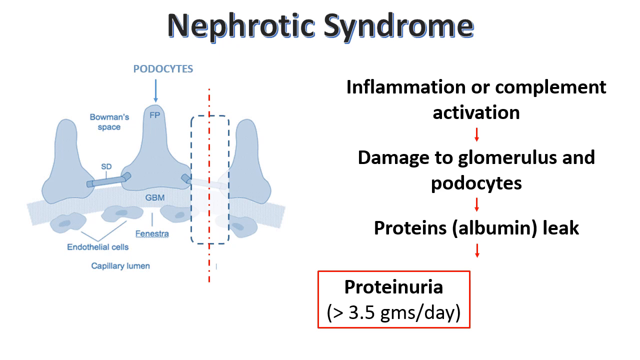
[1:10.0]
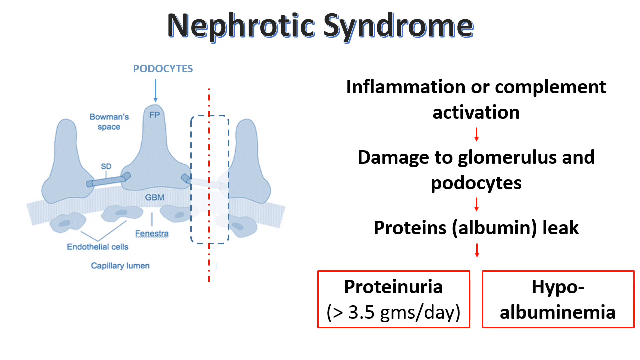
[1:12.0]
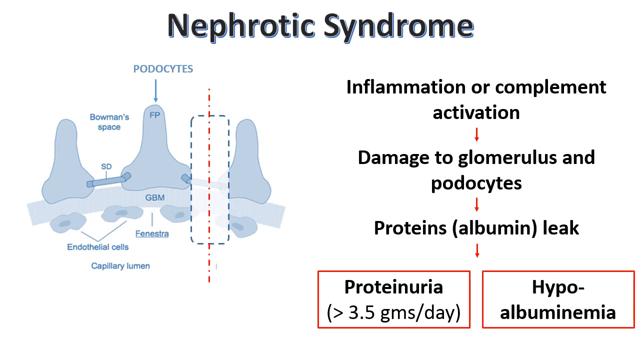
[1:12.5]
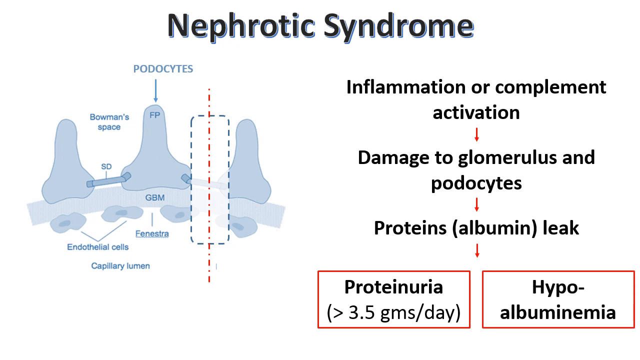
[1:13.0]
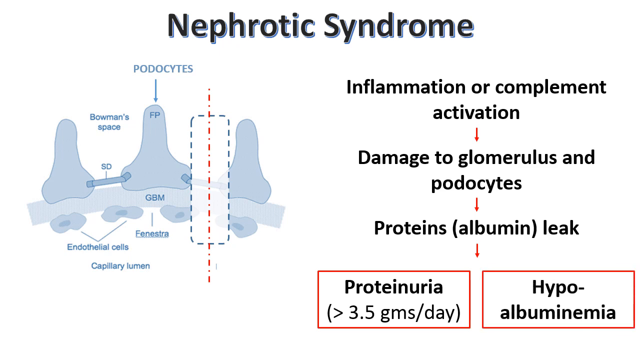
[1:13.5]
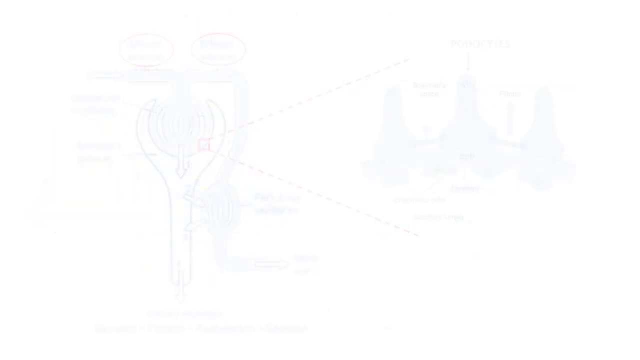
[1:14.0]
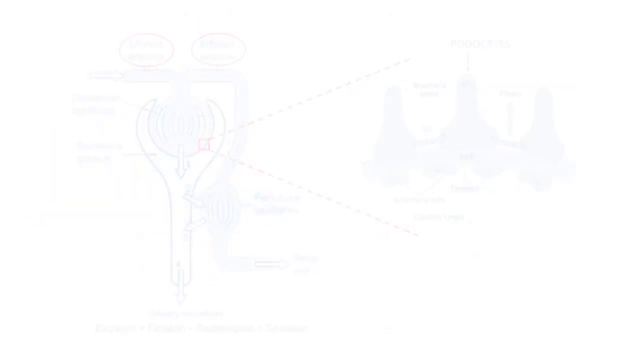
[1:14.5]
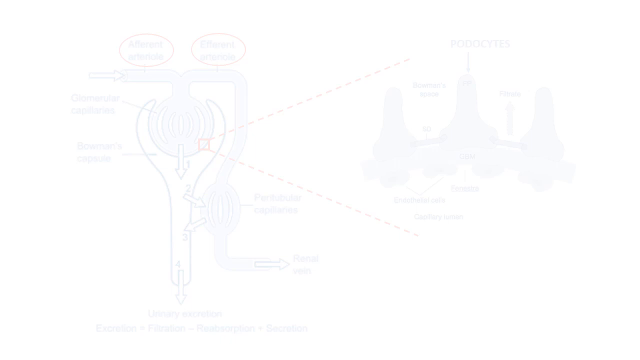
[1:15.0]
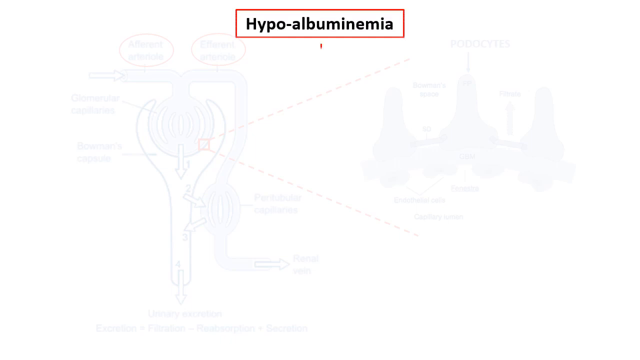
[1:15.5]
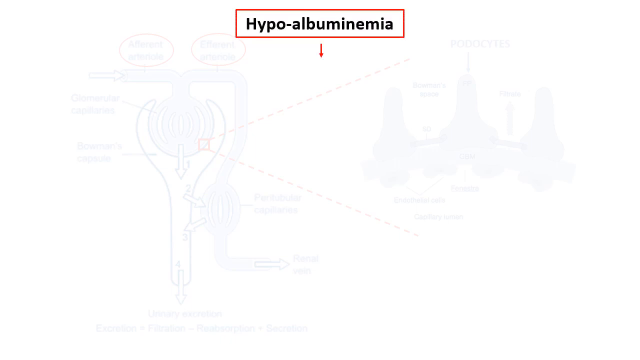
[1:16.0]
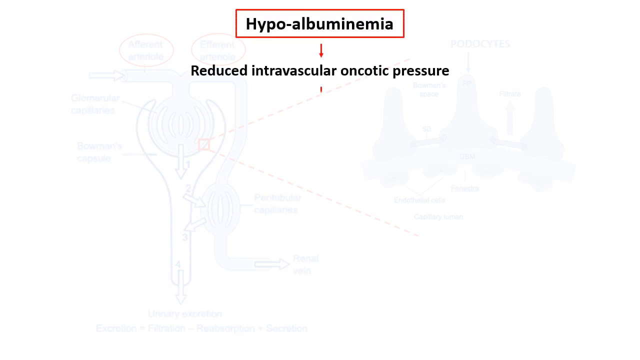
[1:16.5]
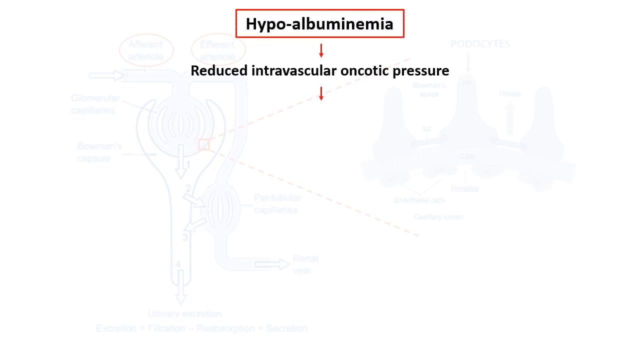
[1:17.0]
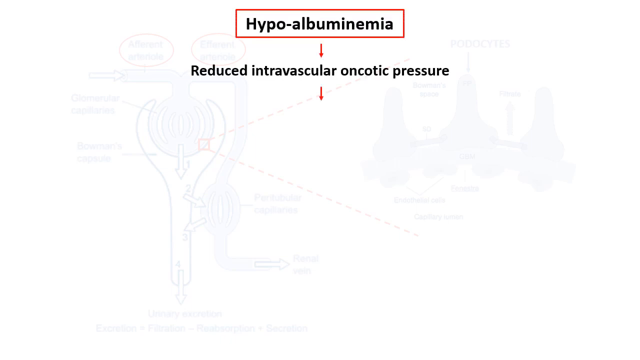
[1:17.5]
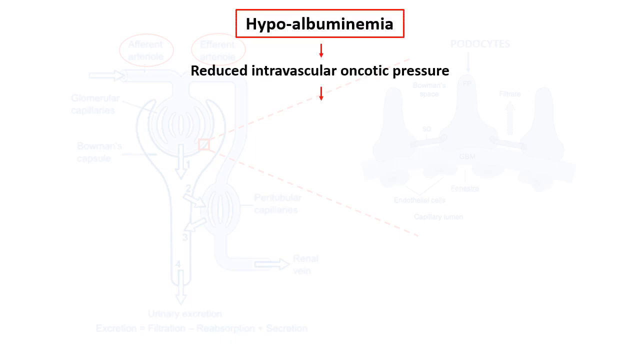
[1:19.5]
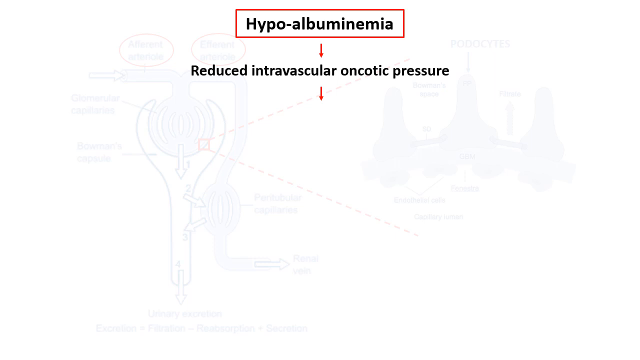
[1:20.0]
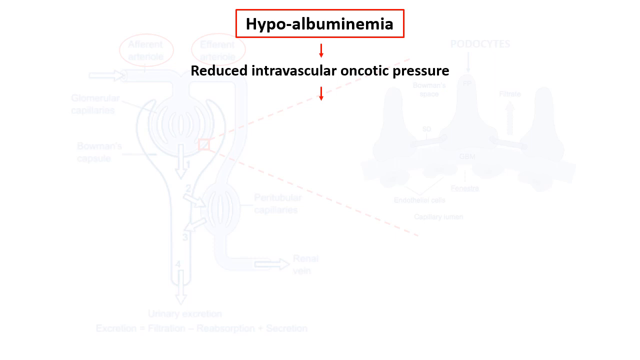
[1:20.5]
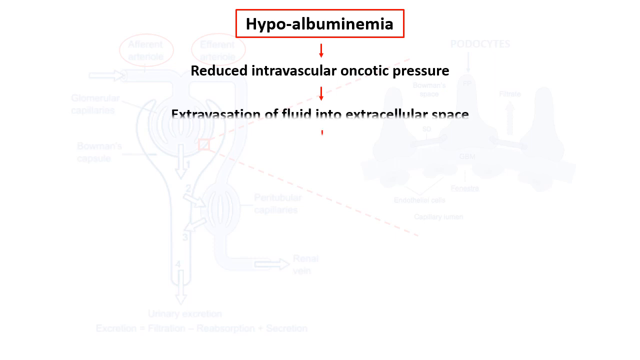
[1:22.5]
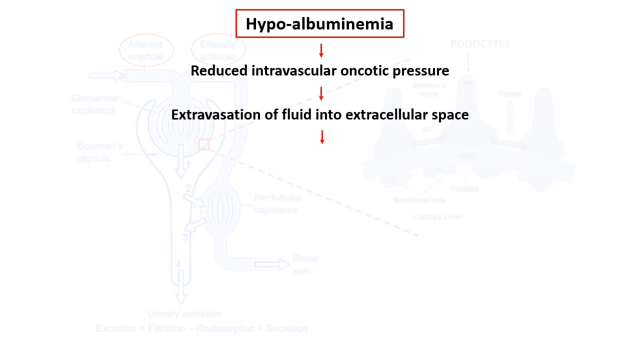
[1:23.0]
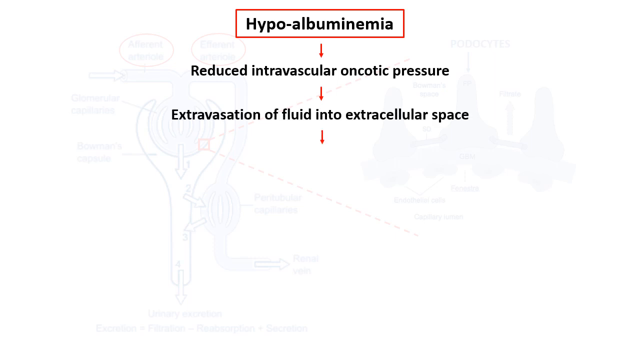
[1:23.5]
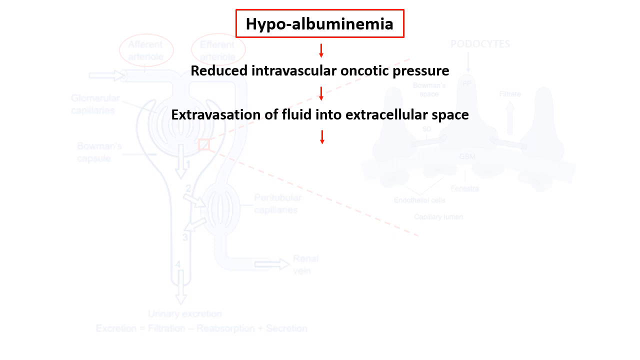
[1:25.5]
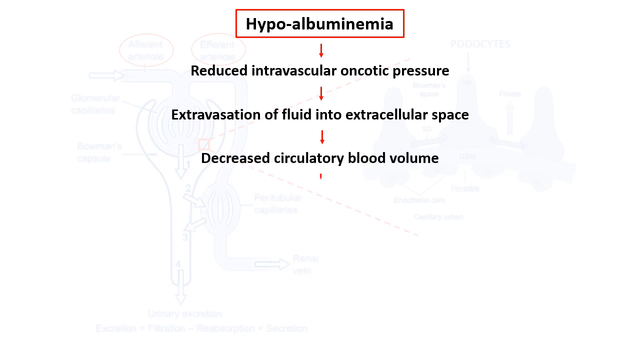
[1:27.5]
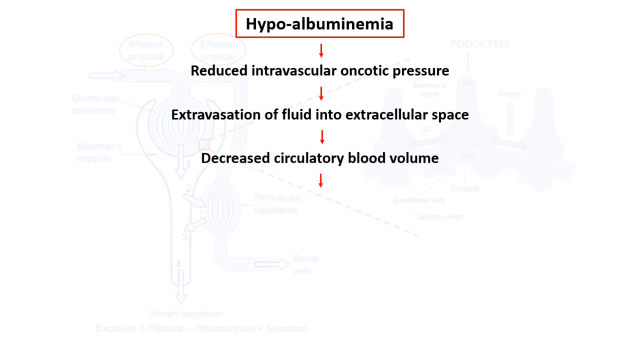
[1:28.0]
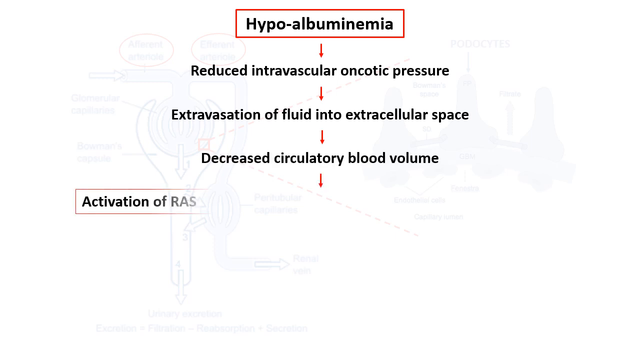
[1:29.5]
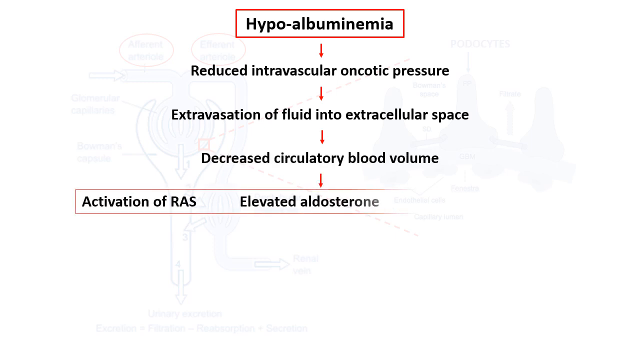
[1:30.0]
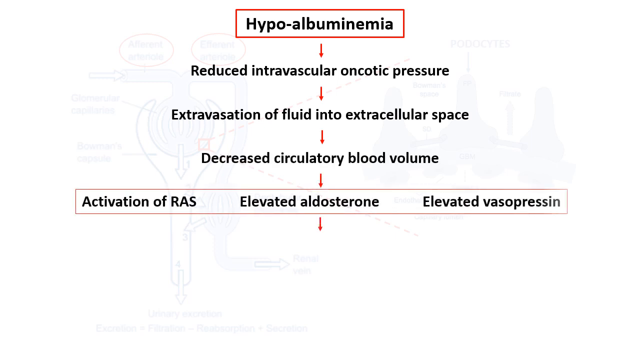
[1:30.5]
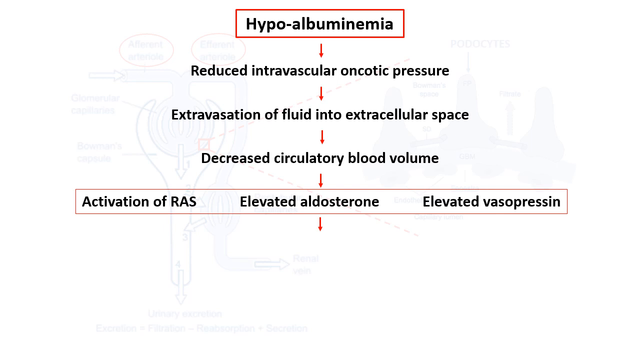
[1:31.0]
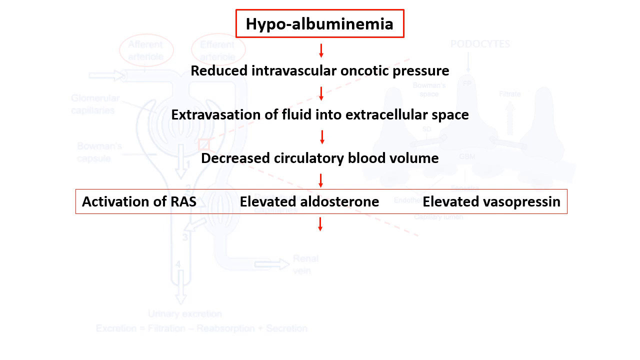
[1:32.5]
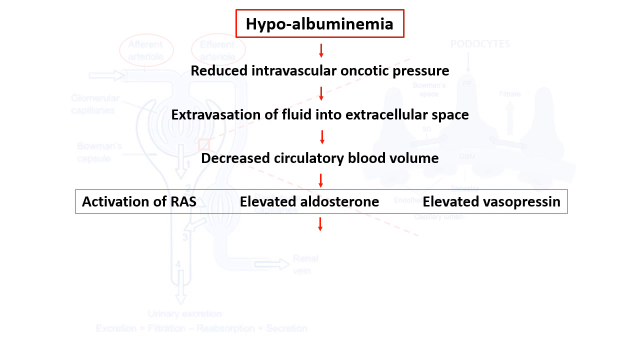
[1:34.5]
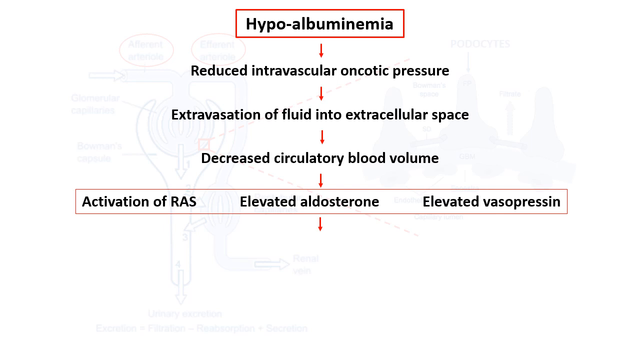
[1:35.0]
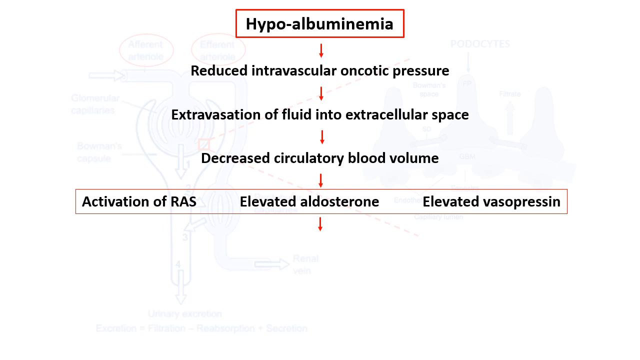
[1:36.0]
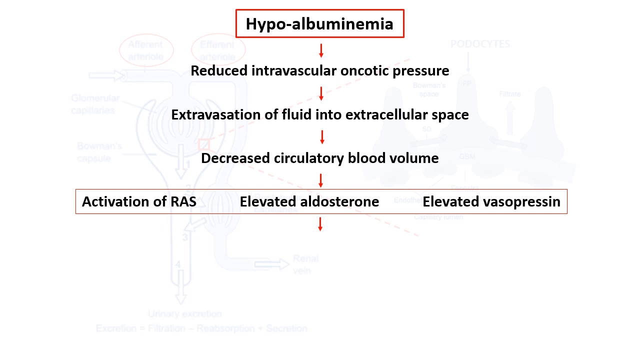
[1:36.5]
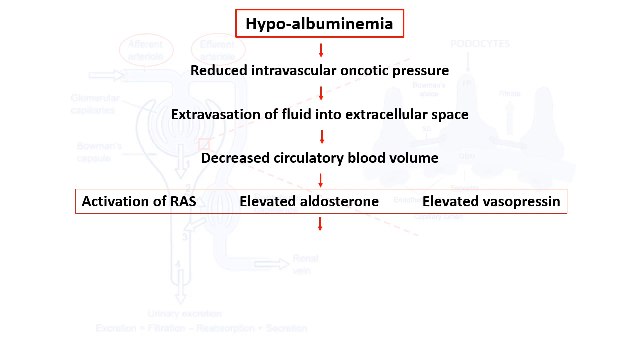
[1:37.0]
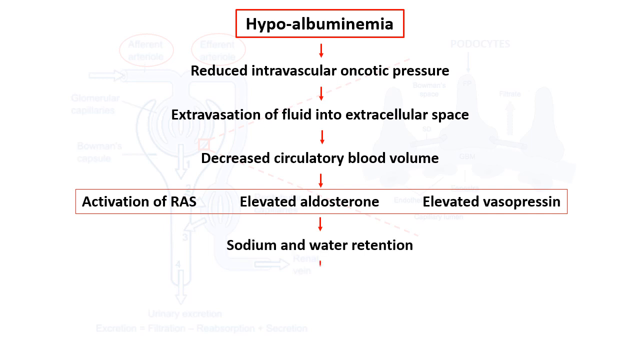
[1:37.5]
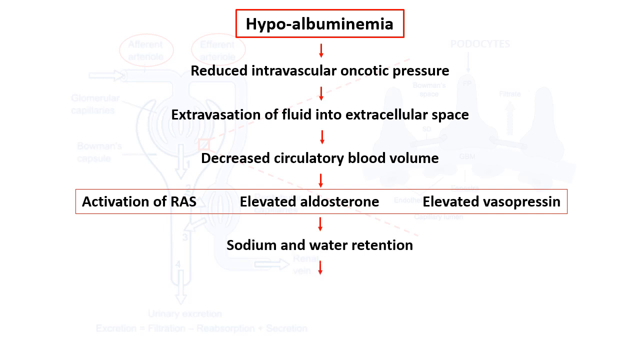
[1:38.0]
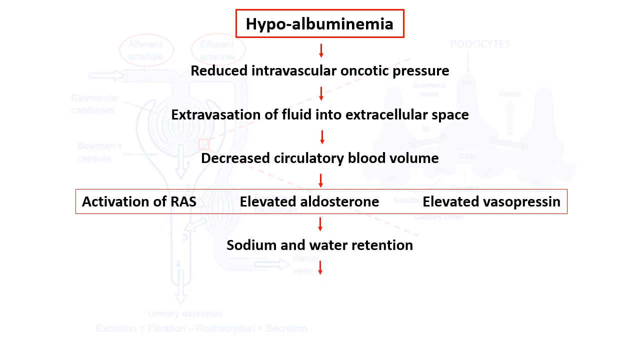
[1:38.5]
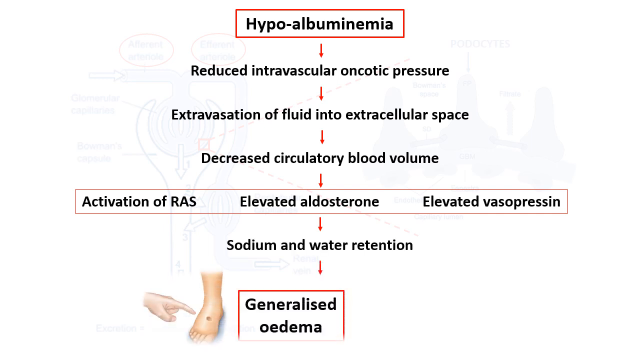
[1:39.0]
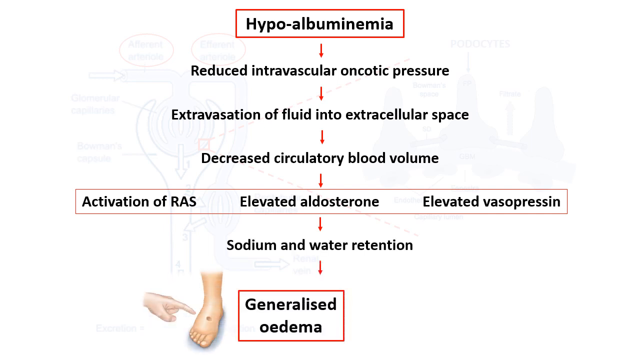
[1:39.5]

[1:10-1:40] "Nephrotic syndrome" is at the top, the podocytes diagram is on the left, and the flow of items is to the right. Next to "proteinuria" appears another red rectangle containing "hypoalbuminemia". That disappears and a new white page appears. At the very top center is a red rectangle outline with "hypoalbuminemia" inside in black. A red arrow points down to the black text "reduced intravascular oncotic pressure", another red arrow down leads to text ending "of fluid into extracellular space", another red arrow down leads to "decreased circulatory blood volume", and another red arrow down leads to a long purple rectangle outline containing black text: "activation of RAS", a space, "elevated aldosterone", a space, and "elevated vasopressin". A little red arrow points down to "sodium and water retention", and another red arrow down leads to "generalized oedema" in a red rectangle outline. To the left of that is an illustration of a foot with a hand pointing its index finger at the foot.